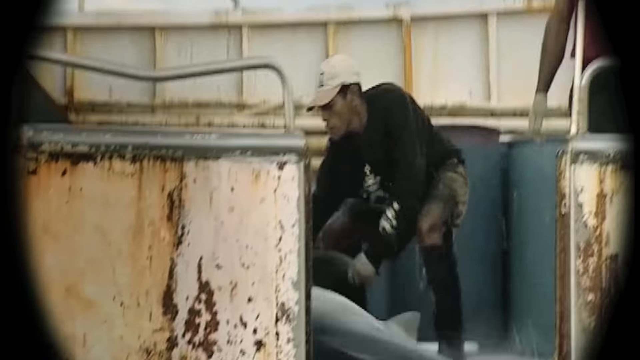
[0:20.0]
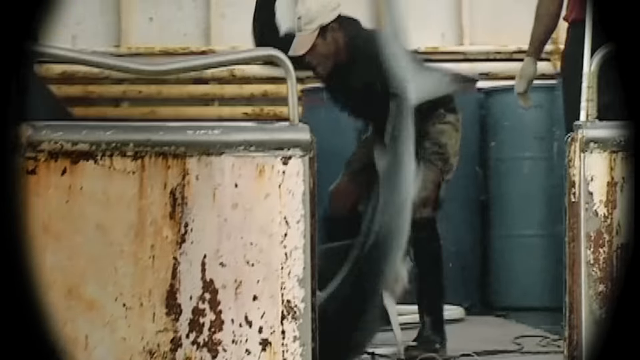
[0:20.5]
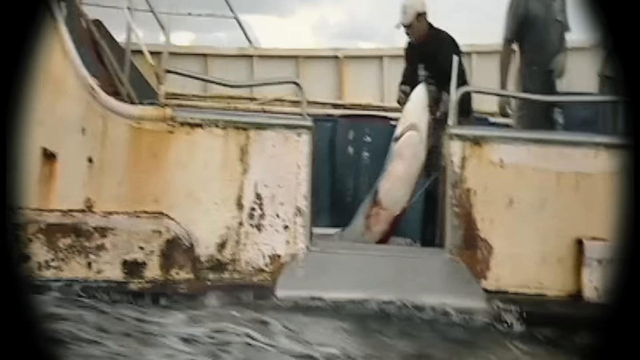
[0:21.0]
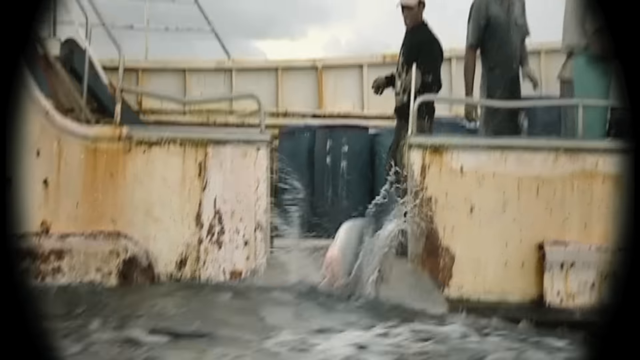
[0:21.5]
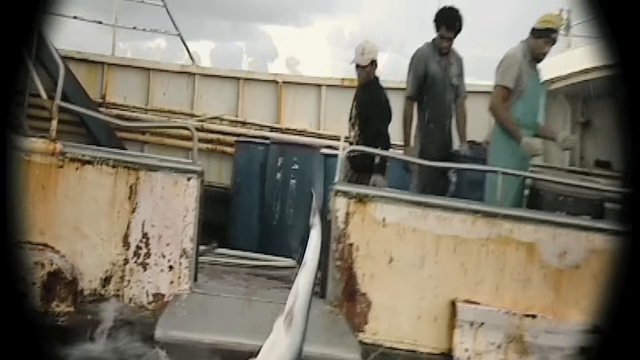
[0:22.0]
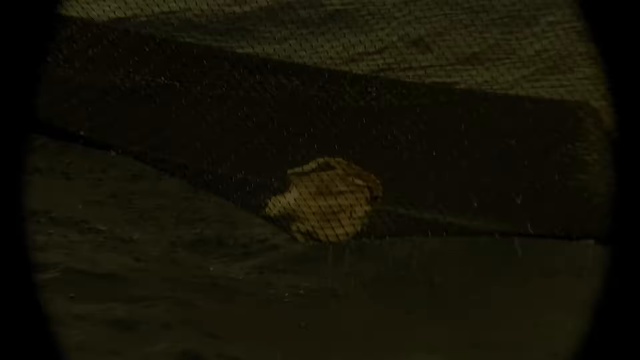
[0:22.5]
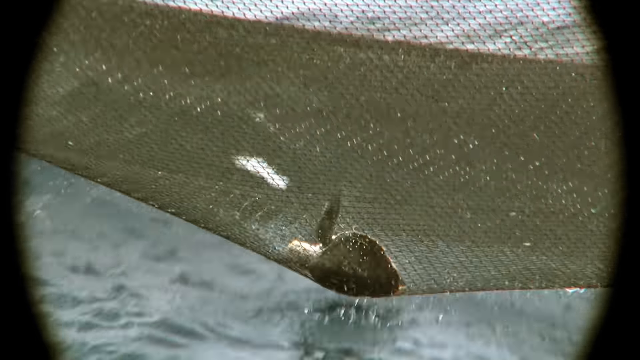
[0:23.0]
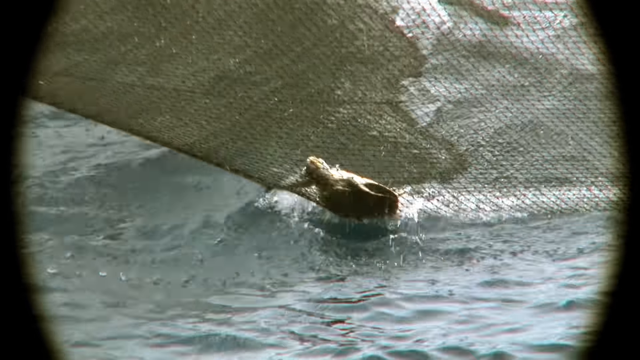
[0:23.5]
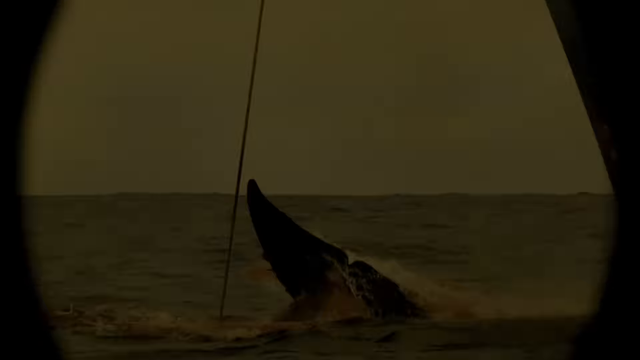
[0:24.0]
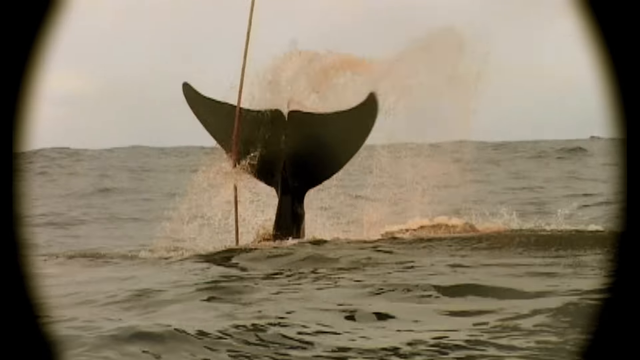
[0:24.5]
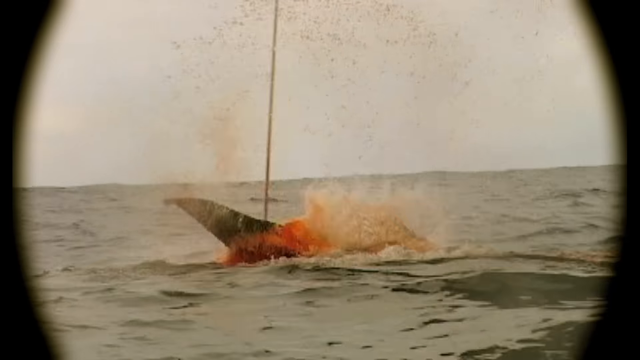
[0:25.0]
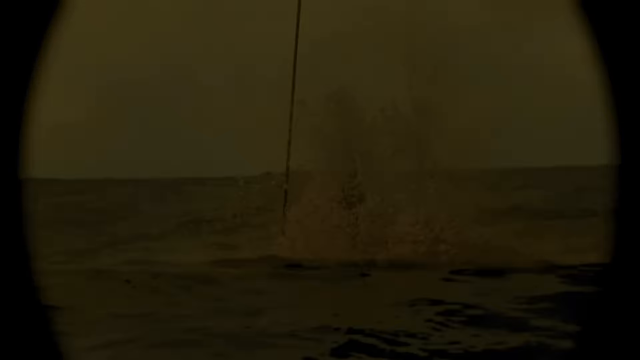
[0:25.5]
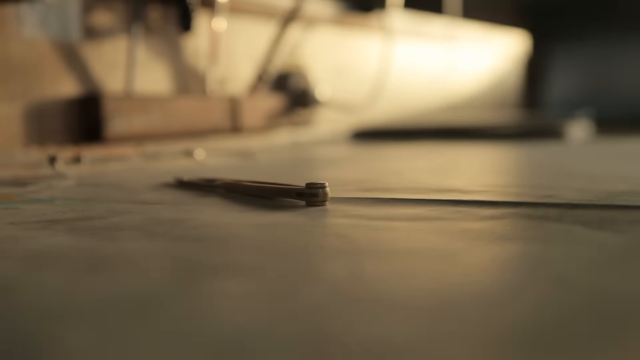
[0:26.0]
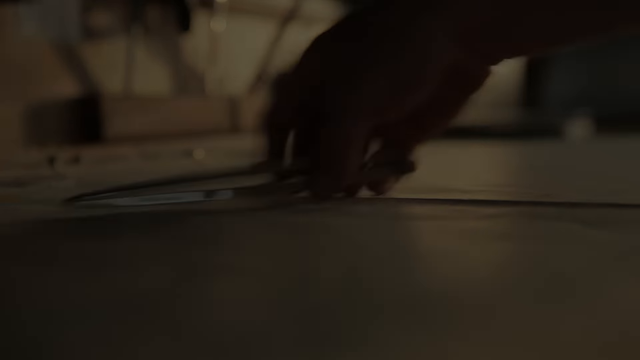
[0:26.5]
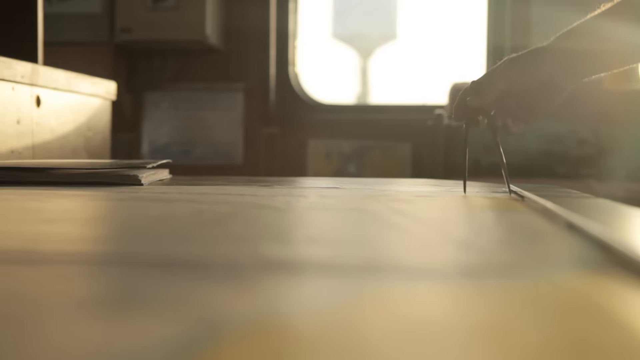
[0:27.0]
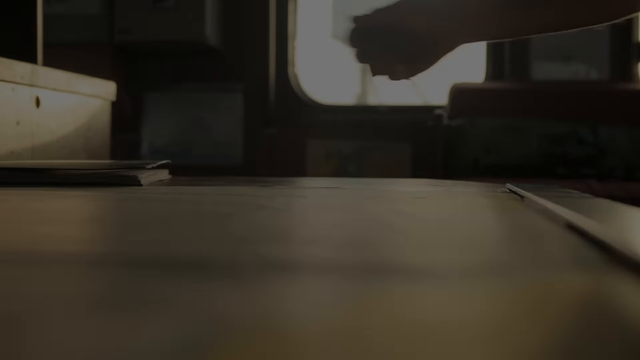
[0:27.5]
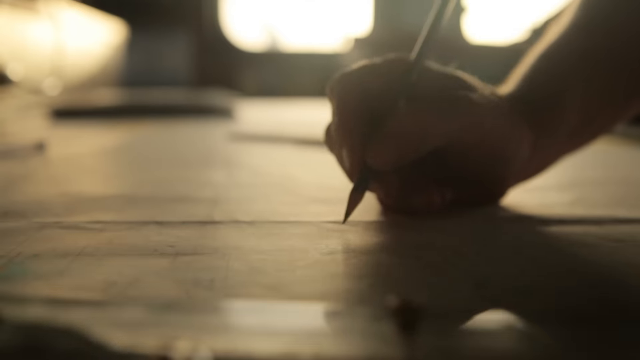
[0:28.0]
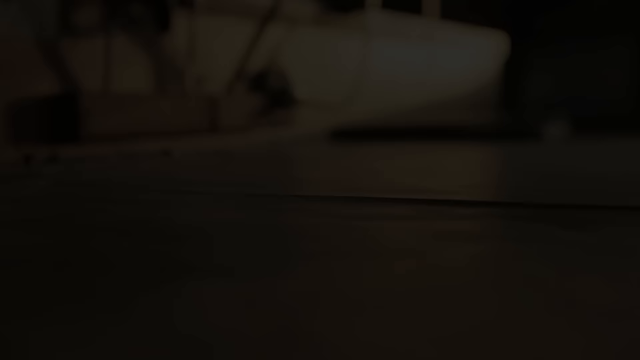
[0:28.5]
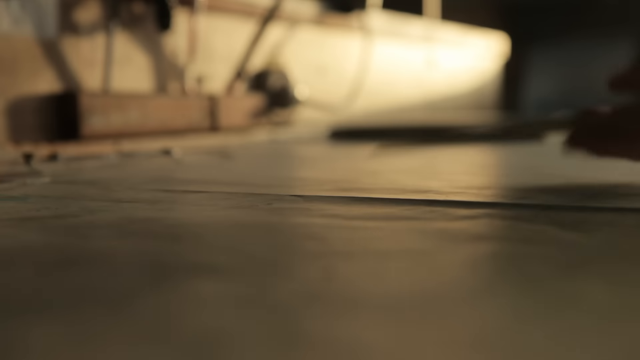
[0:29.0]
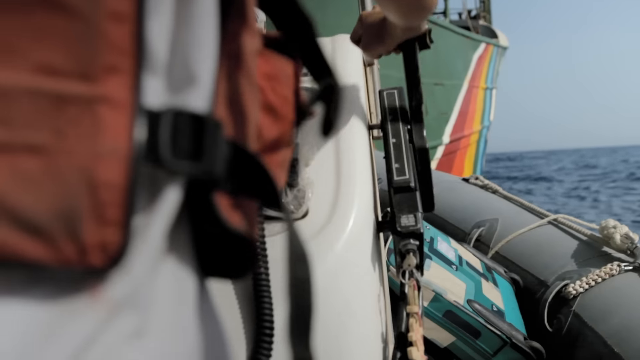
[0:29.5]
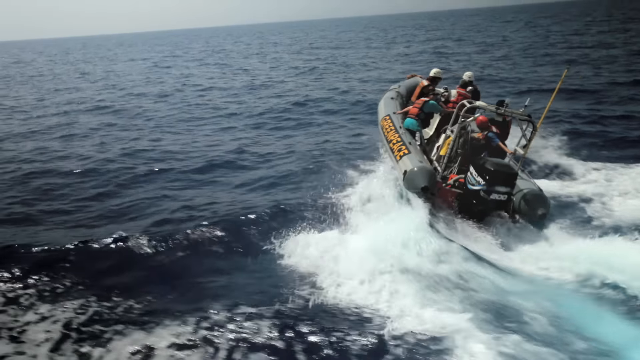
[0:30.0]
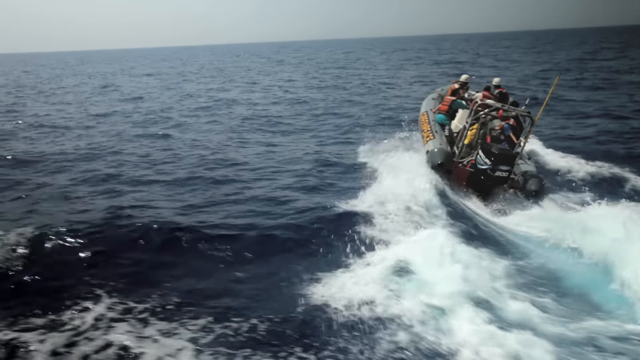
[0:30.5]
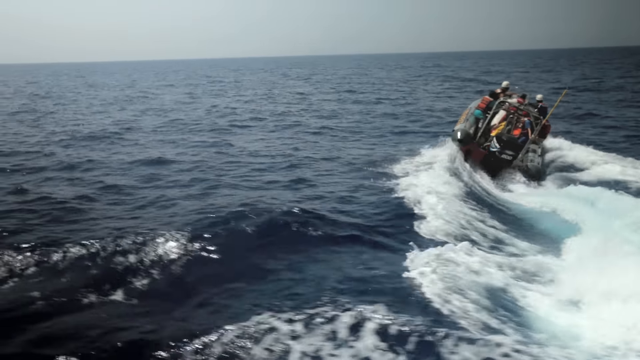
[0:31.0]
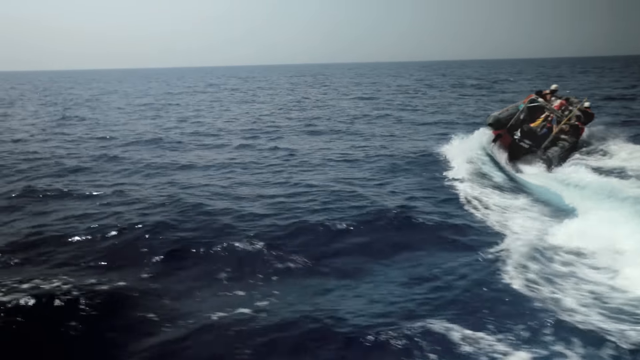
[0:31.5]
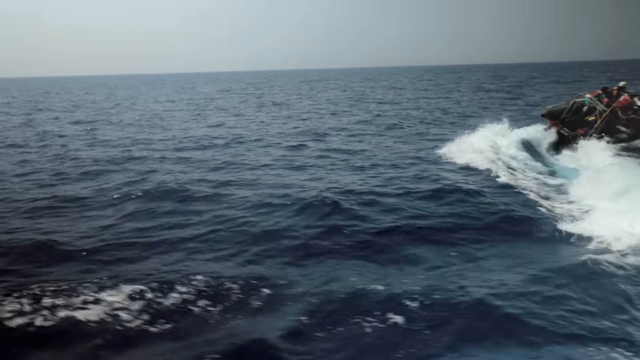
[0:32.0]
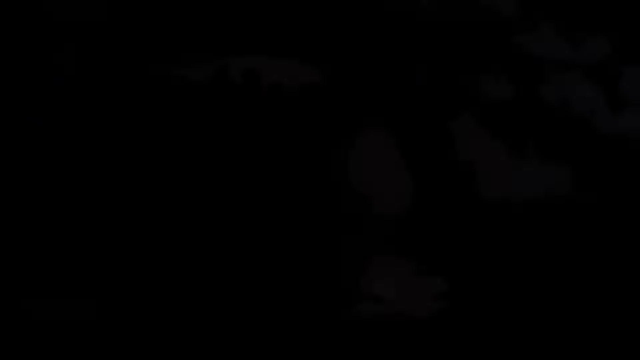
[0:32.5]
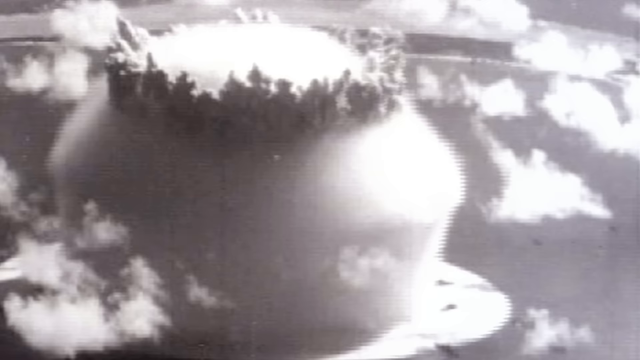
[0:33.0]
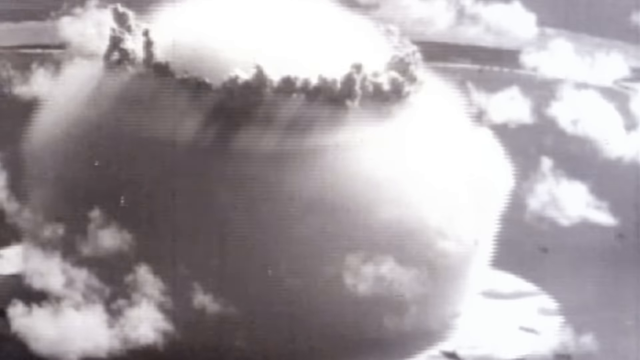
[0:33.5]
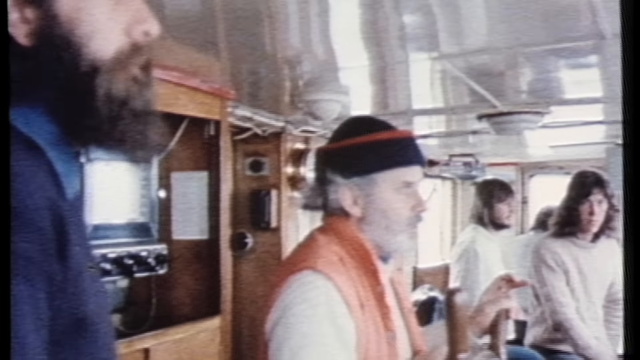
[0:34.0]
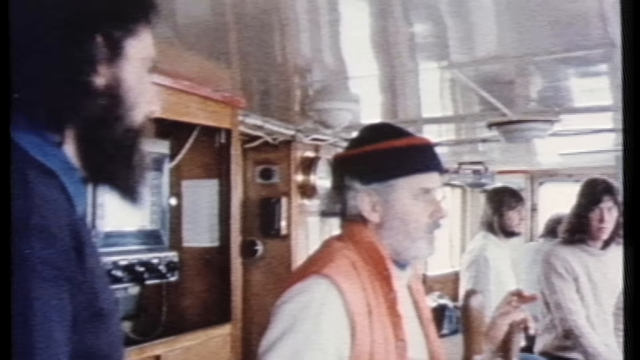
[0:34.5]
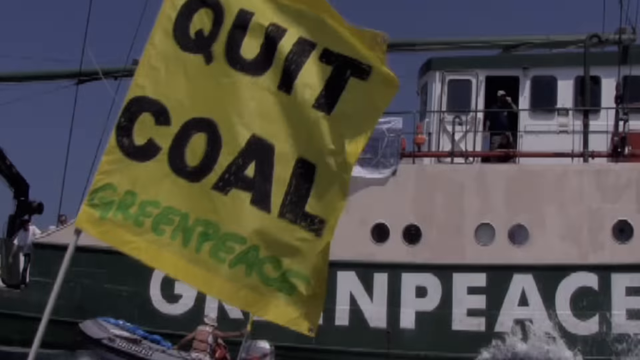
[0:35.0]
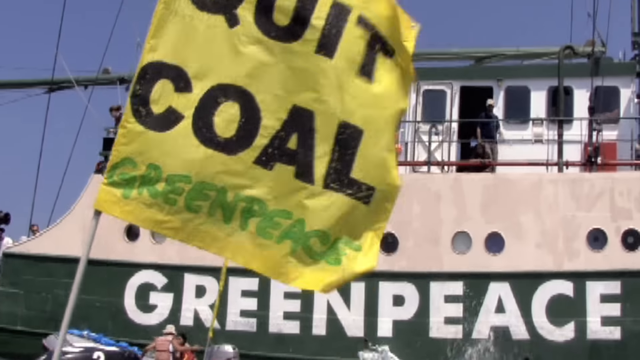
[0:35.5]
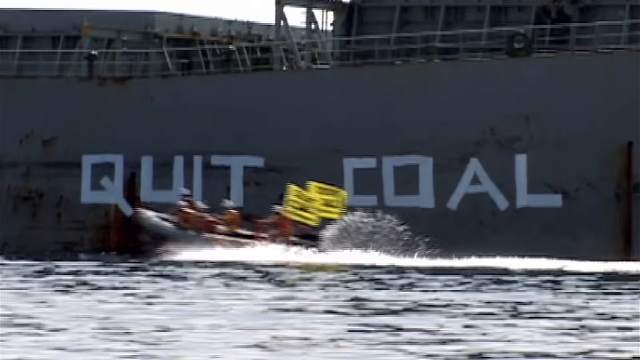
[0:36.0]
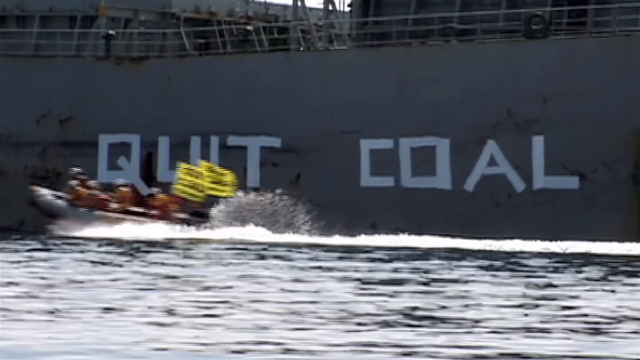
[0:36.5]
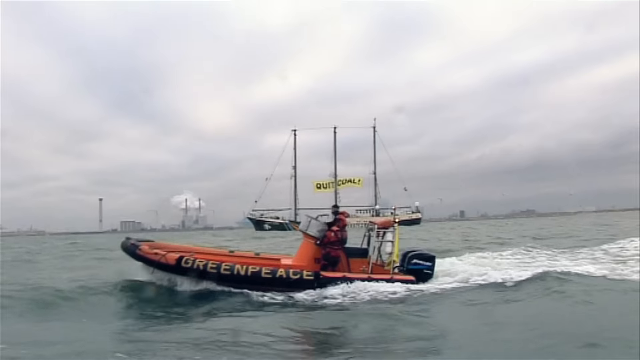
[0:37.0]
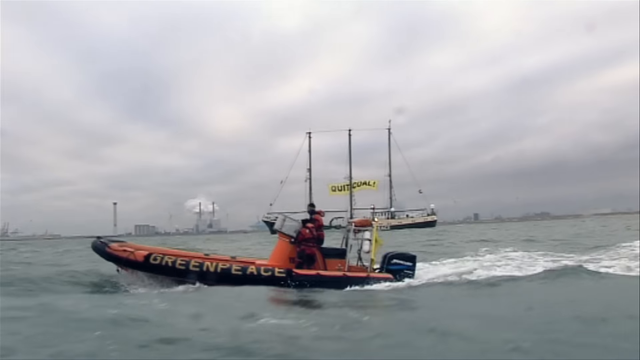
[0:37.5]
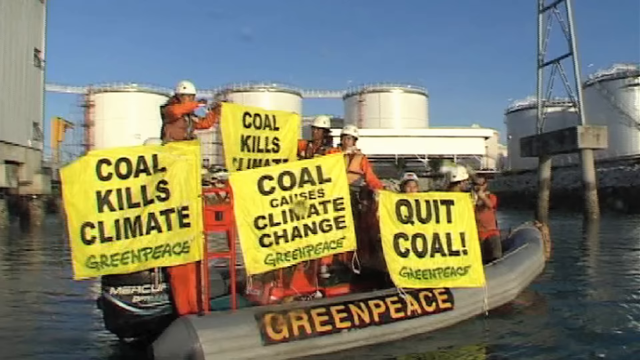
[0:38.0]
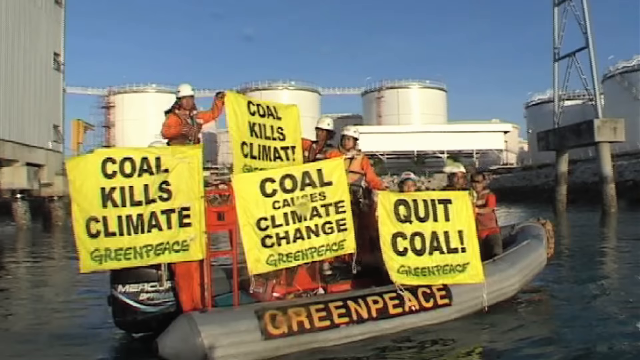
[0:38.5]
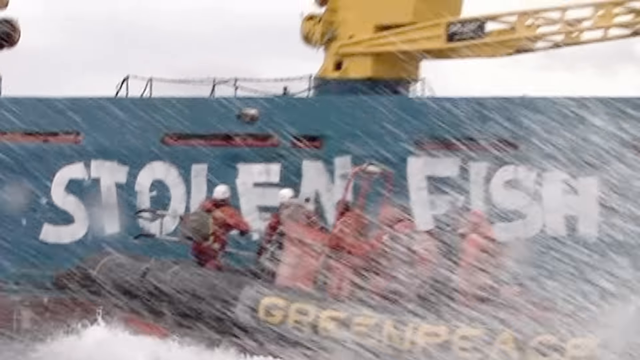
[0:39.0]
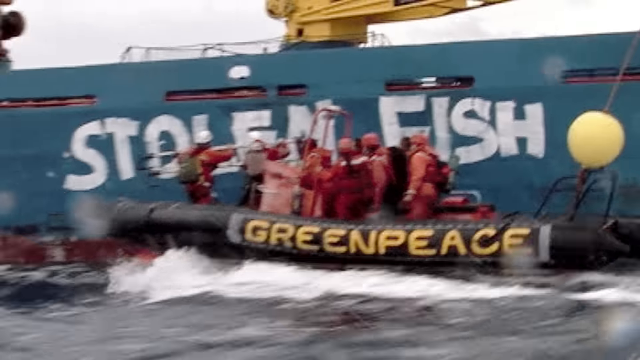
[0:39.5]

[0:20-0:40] This appears to be a Greenpeace video against commercial fishing. A fisherman chops the head off a fish and throws it back into the water. A whale looks hurt, with what seems to be blood in the water around it, and a turtle seems to be stuck in a fishing net. Greenpeace rafts come up to fishing boats and move around them carrying protest signs that say "quit coal" and "Greenpeace." In another scene, a bomb goes off in the water; it looks like an atomic bomb. The protesters are in a dinghy while the fishermen are in a giant fishing boat. The side of one of the boats has been graffitied with the words "stolen fish."